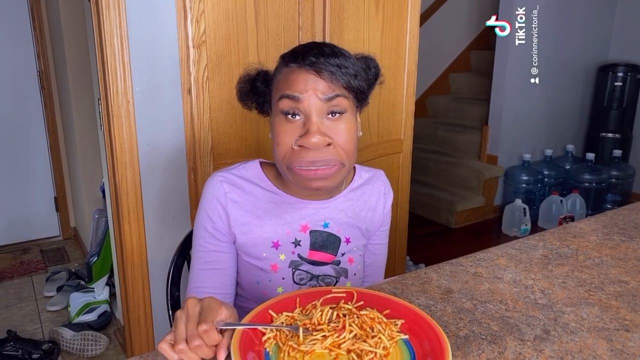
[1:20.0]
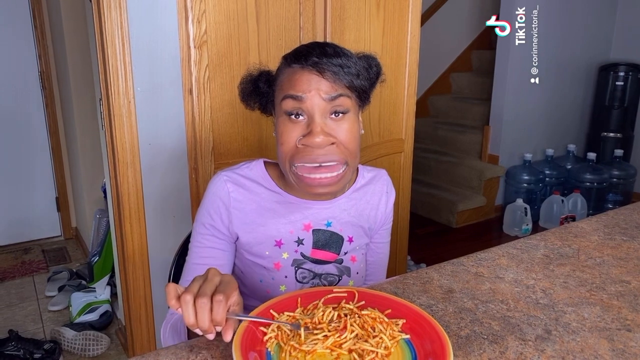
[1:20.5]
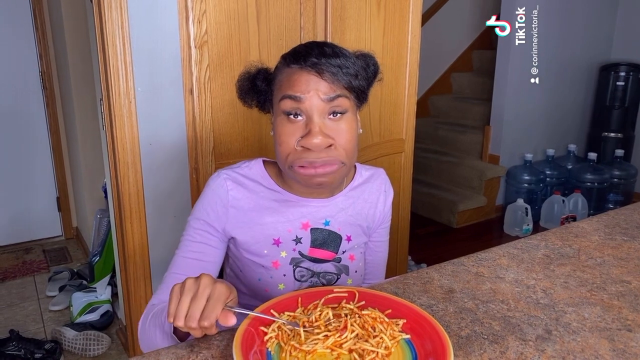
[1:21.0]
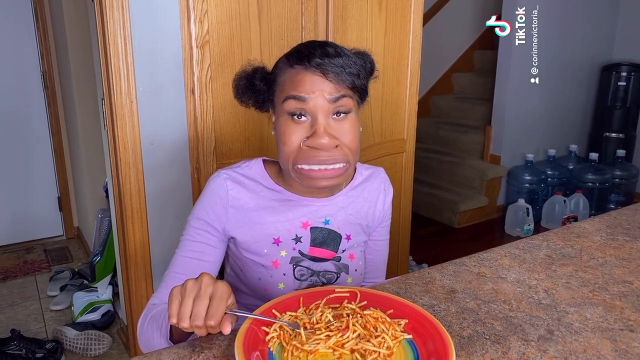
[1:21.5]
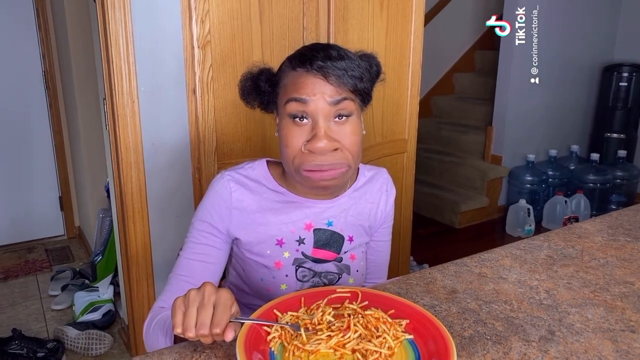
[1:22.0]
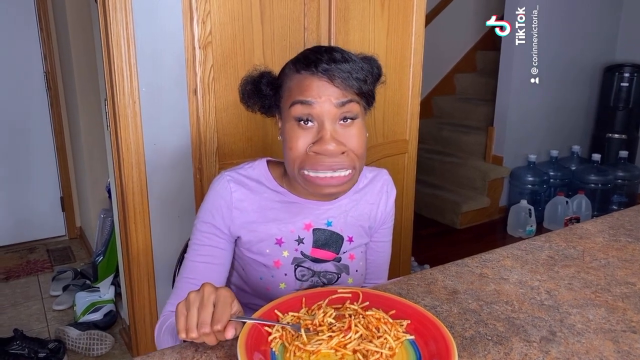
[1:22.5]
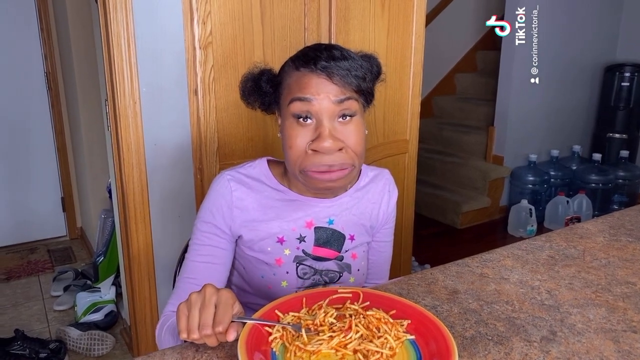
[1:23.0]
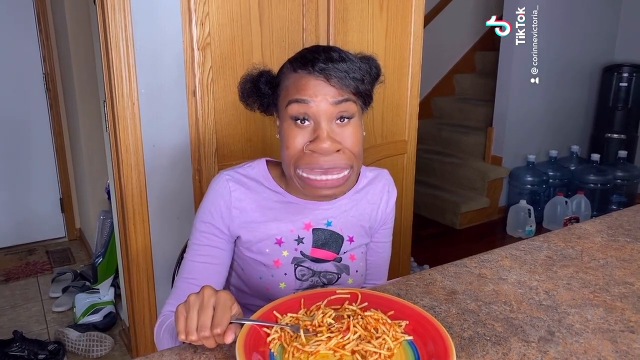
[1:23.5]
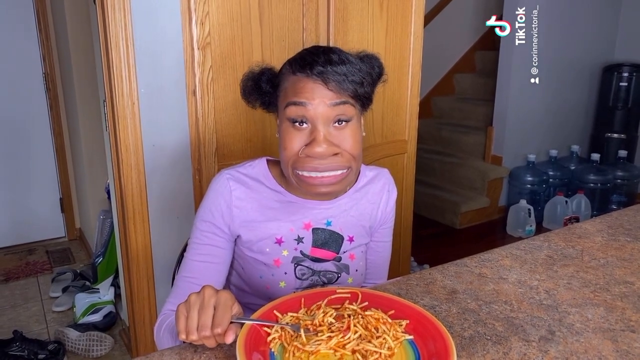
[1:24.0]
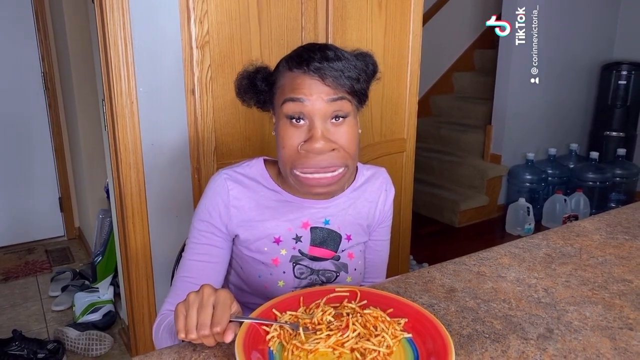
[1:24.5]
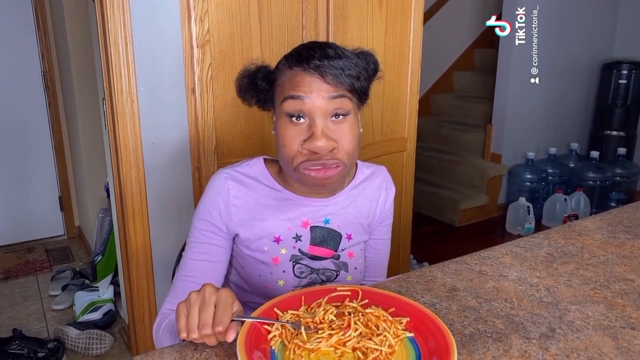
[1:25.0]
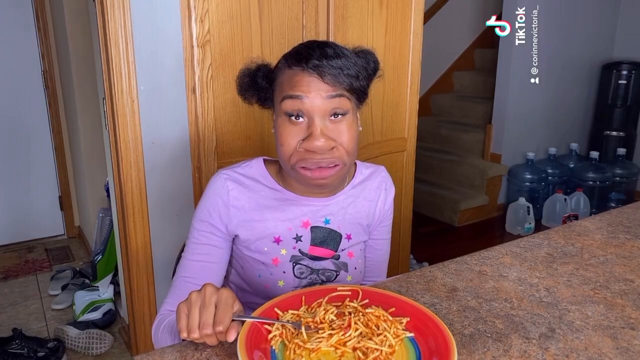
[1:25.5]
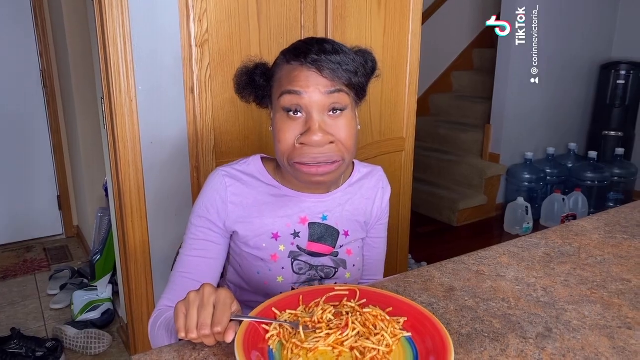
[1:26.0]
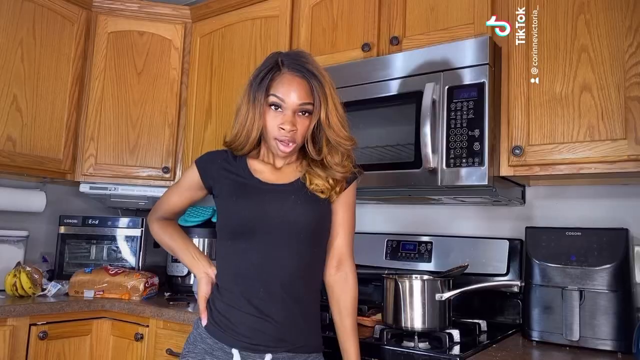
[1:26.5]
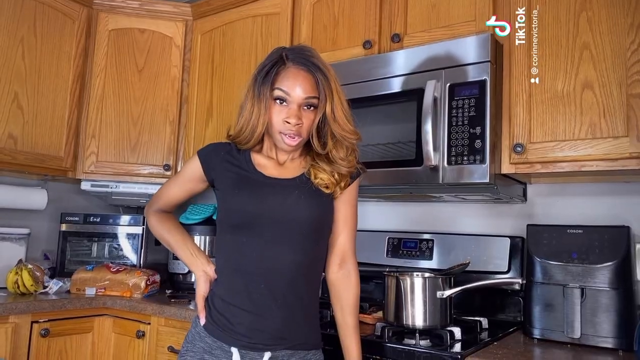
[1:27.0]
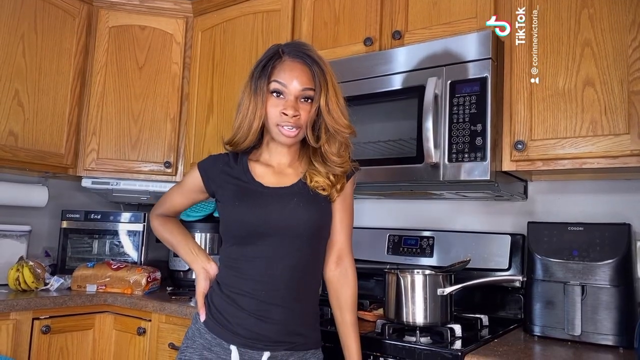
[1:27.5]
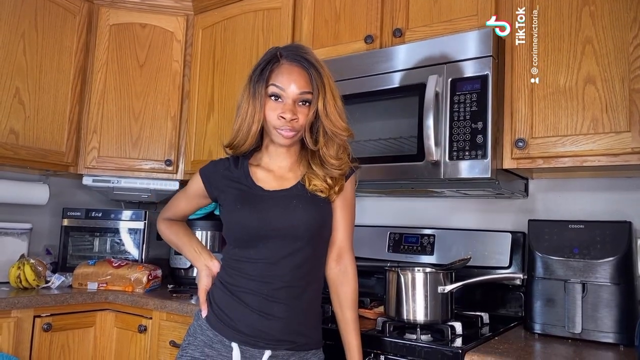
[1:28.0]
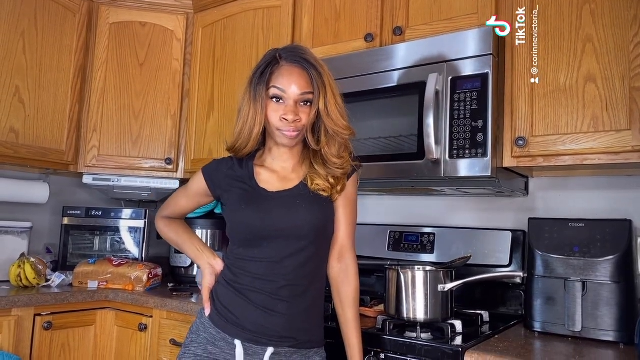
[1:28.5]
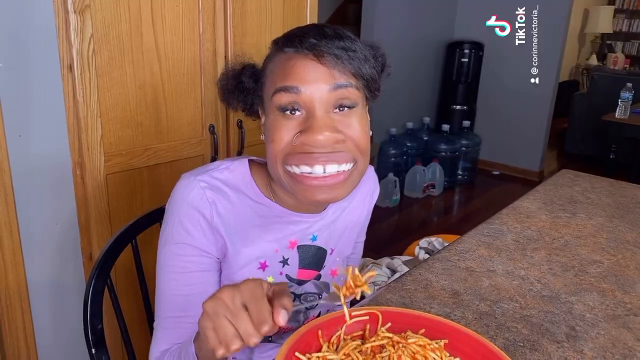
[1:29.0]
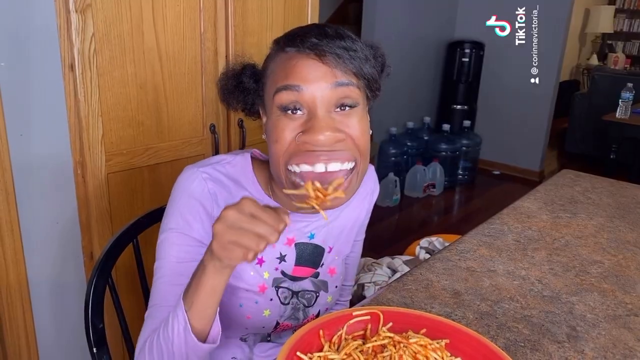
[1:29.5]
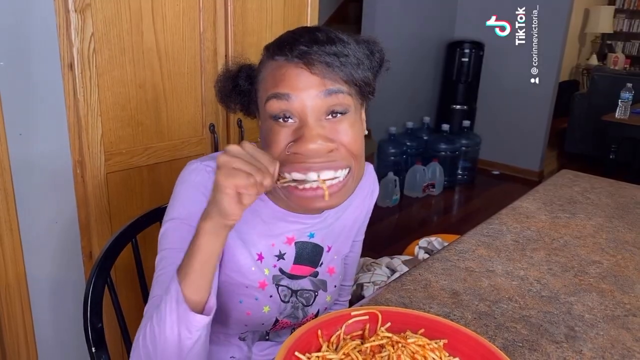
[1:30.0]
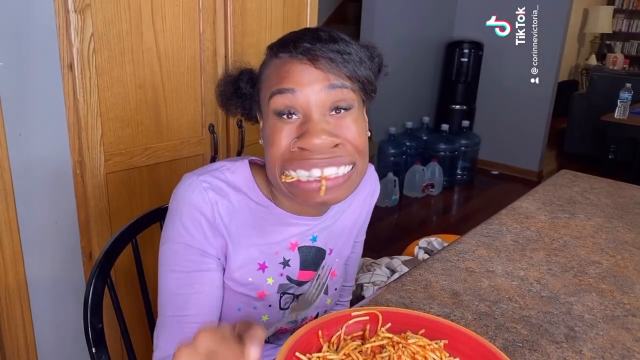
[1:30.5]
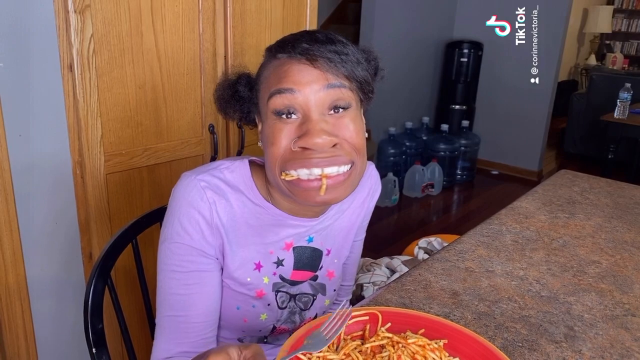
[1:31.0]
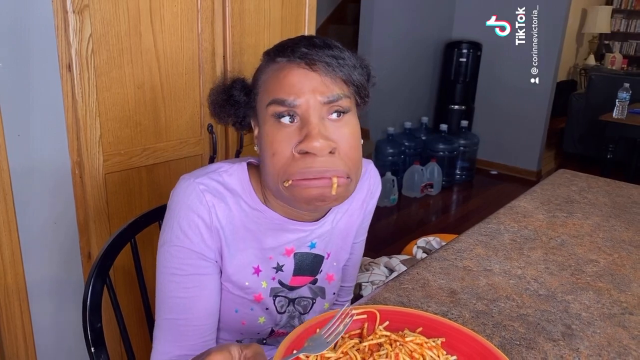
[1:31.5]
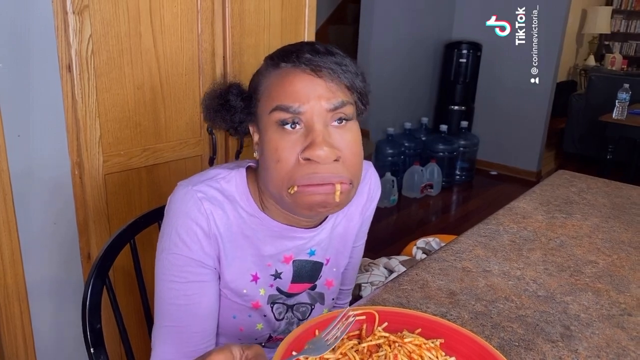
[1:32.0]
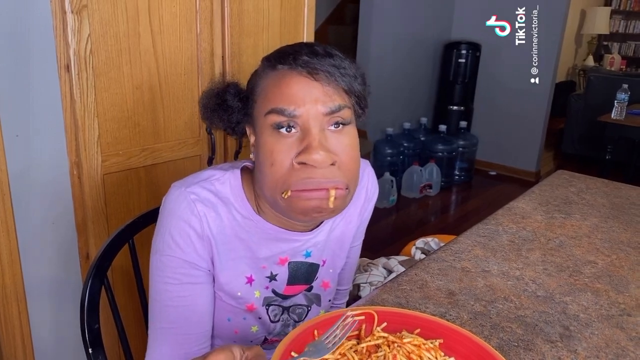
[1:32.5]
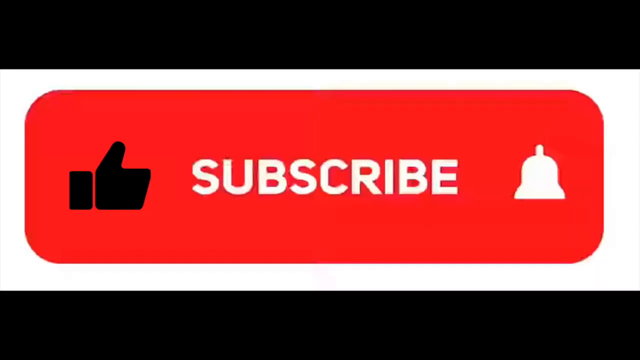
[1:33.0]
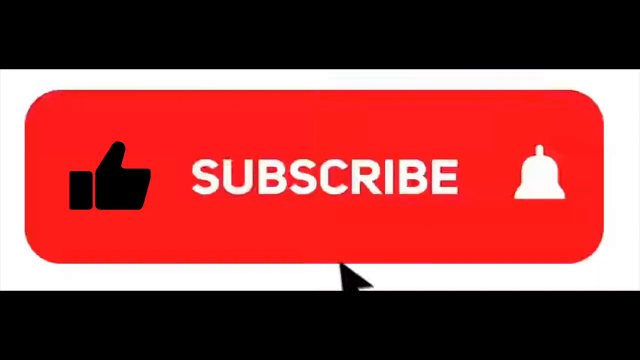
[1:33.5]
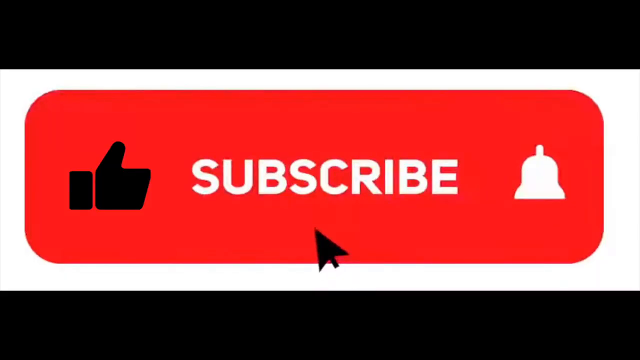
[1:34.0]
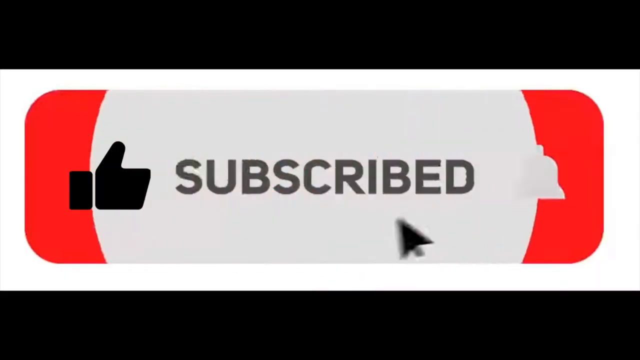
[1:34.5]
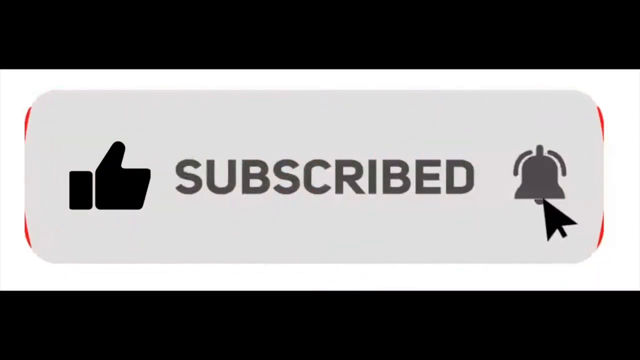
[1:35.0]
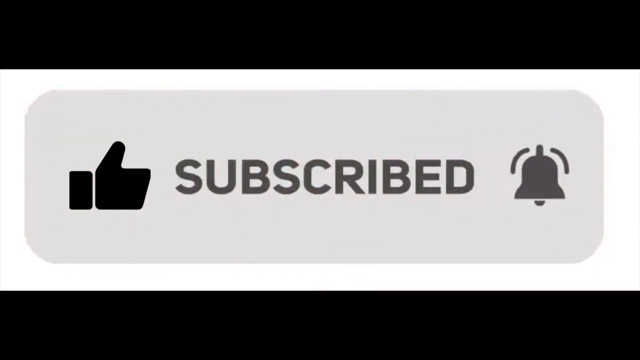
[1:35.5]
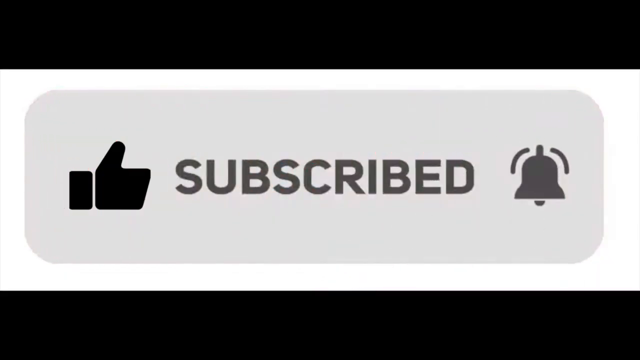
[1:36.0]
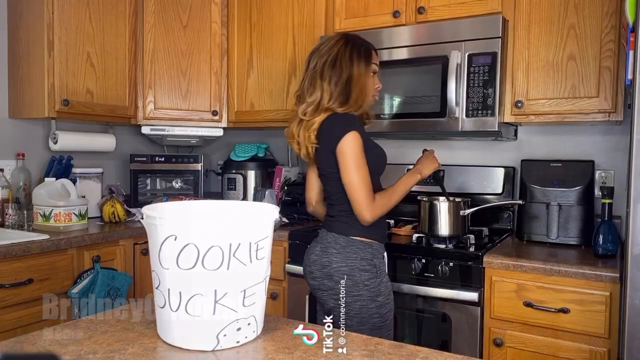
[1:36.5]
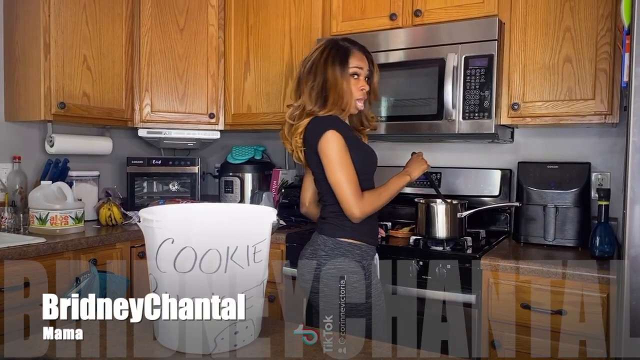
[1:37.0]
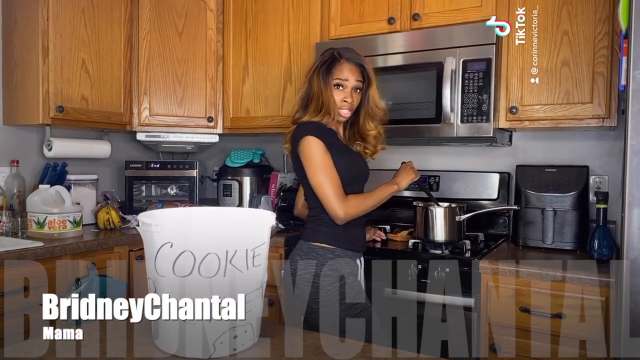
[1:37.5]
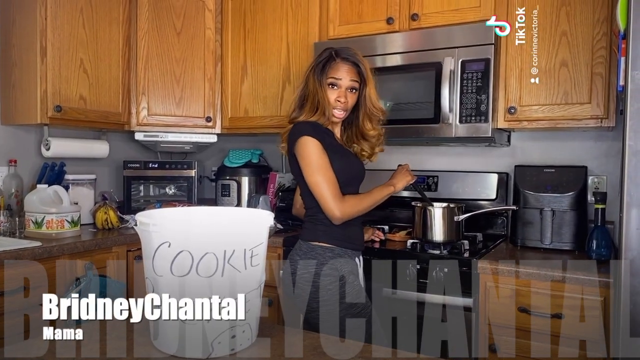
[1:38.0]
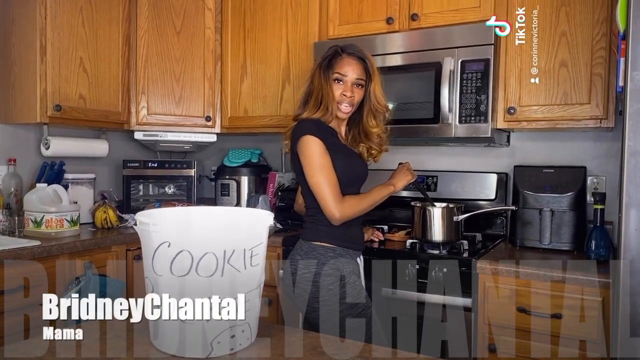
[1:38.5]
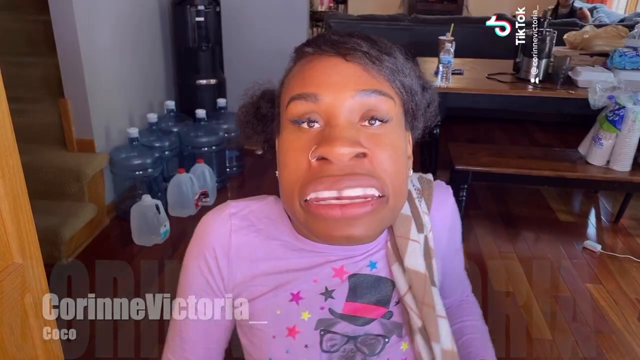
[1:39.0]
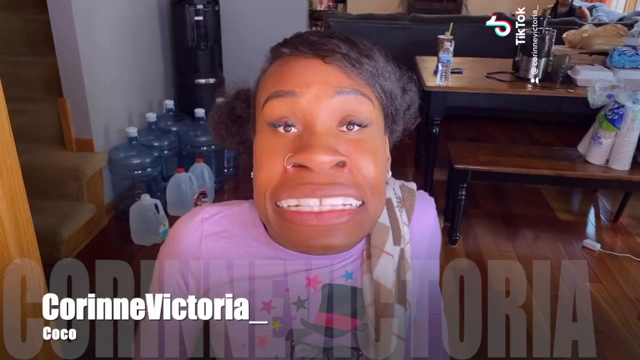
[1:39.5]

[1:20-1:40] A little girl stands wearing a facial filter that hides her face and makes her mouth look very wide, like the girl from the animation. She wears a purple shirt with a picture of a dog in glasses and a top hat with a pink stripe, surrounded by pink, blue and yellow stars. On a plate right in front of her are noodles, fries, or some kind of small fried vegetable. The woman tells her she has to eat all the noodles or she will never have a cookie again. The girl makes a face, unable to stomach another bite.